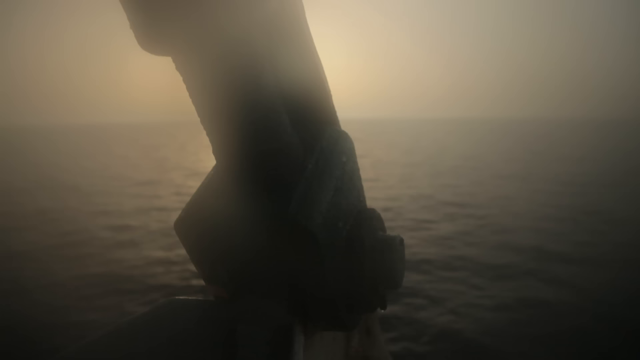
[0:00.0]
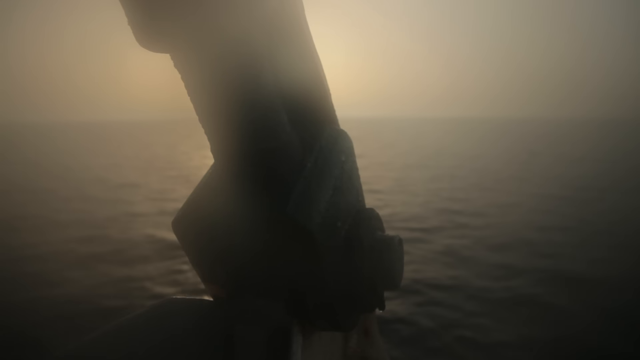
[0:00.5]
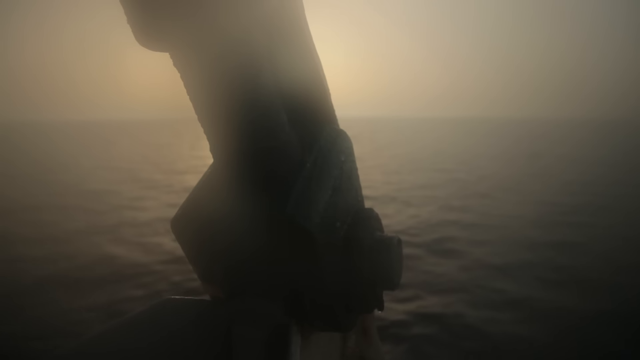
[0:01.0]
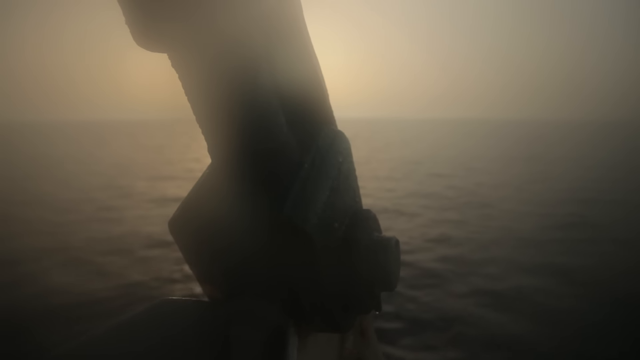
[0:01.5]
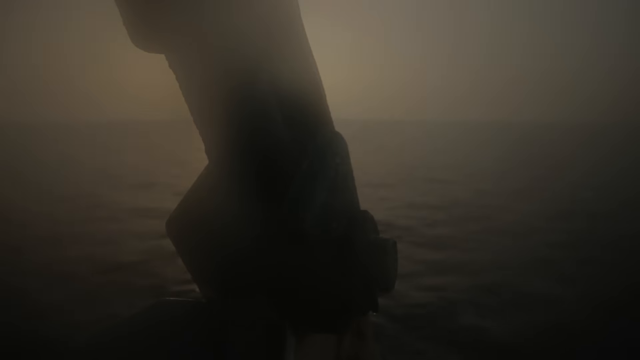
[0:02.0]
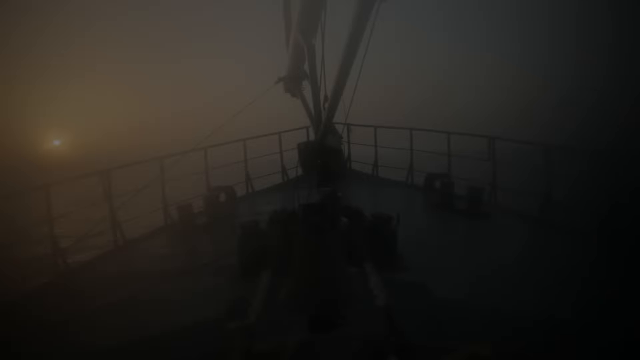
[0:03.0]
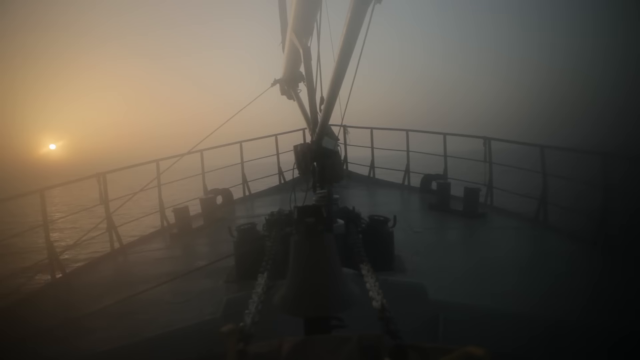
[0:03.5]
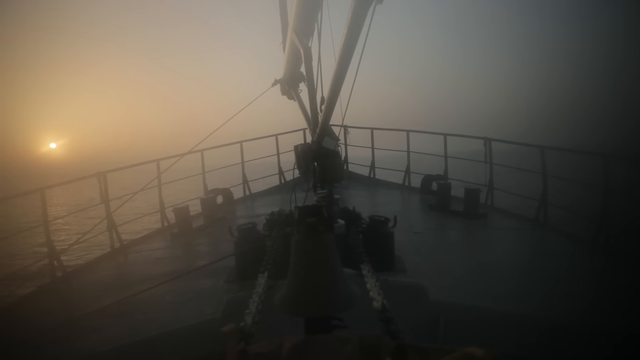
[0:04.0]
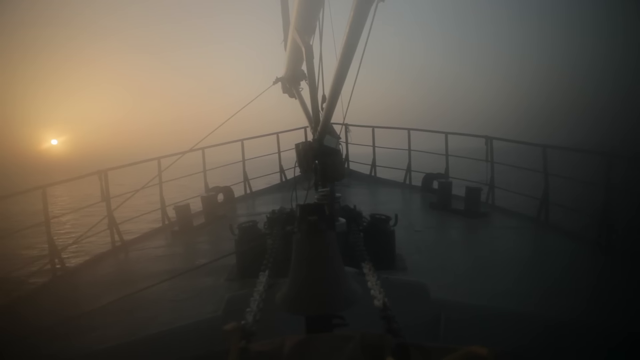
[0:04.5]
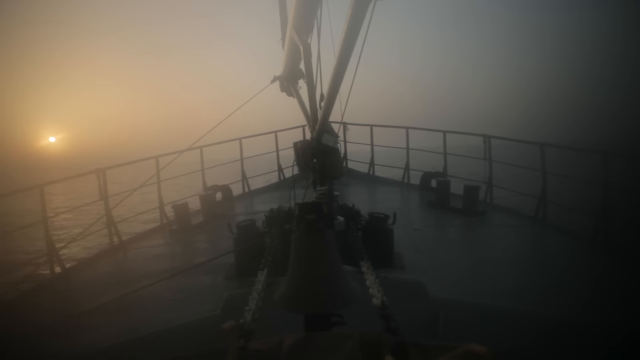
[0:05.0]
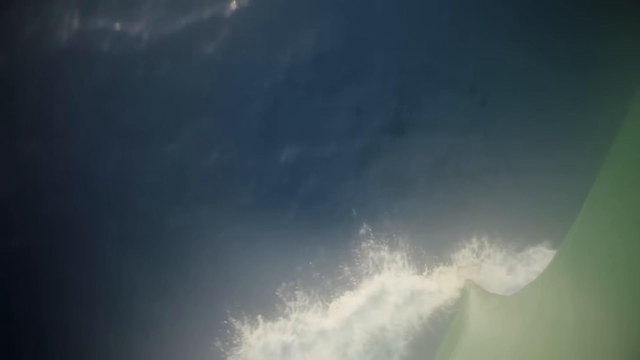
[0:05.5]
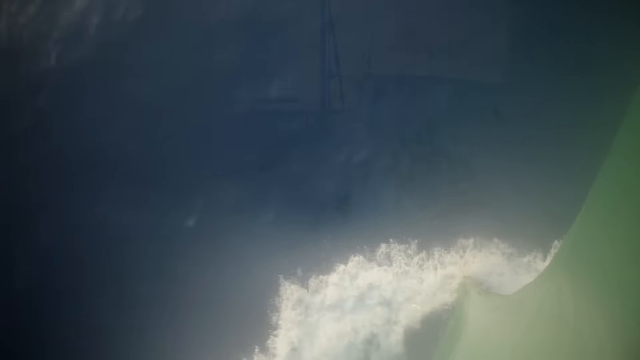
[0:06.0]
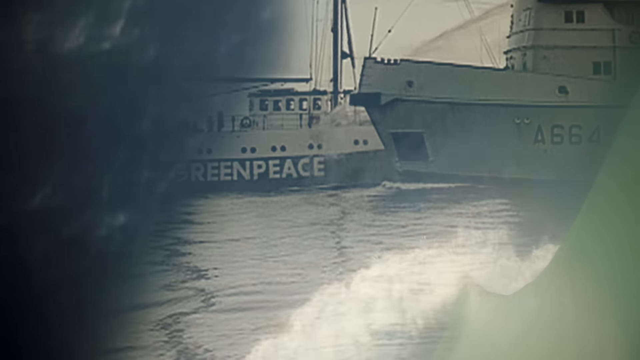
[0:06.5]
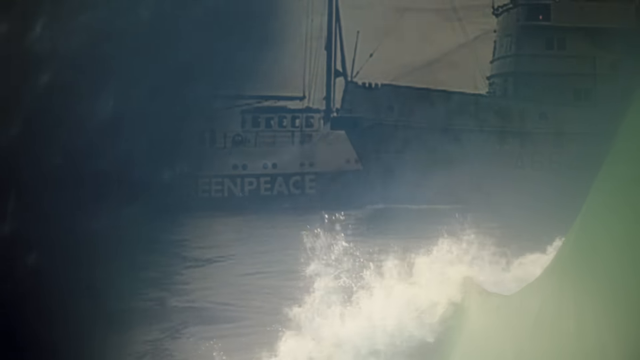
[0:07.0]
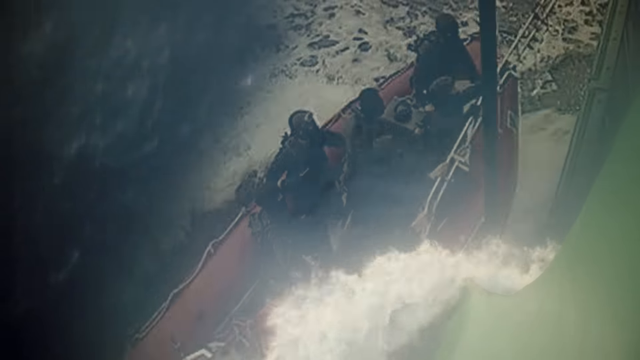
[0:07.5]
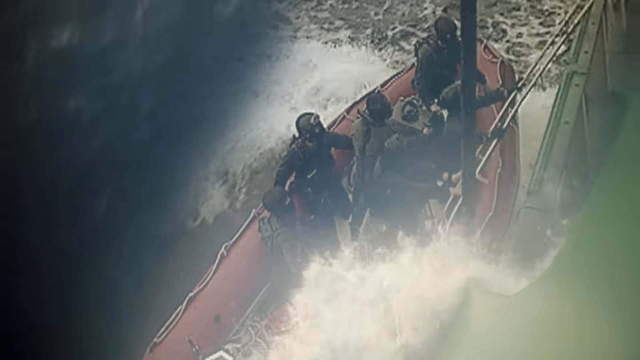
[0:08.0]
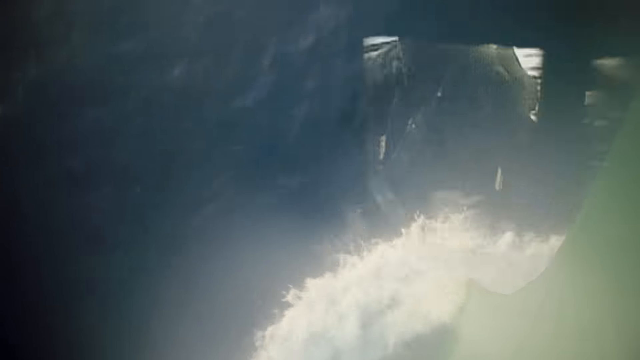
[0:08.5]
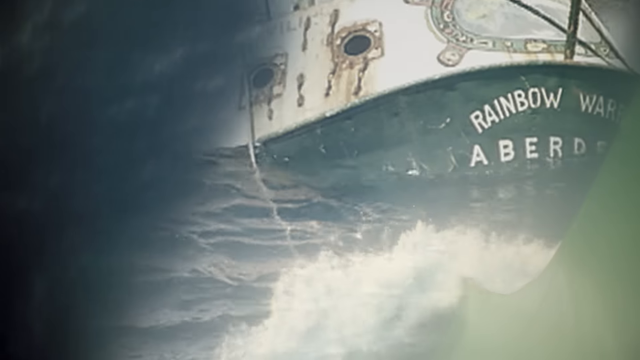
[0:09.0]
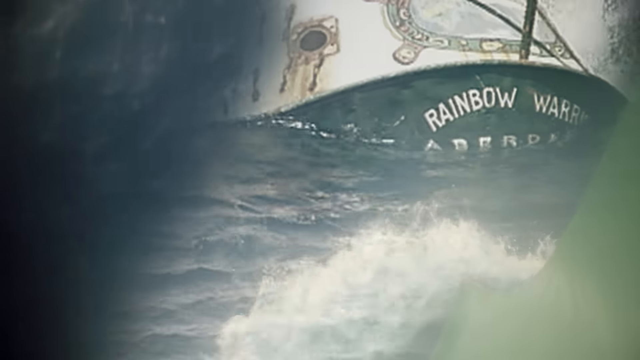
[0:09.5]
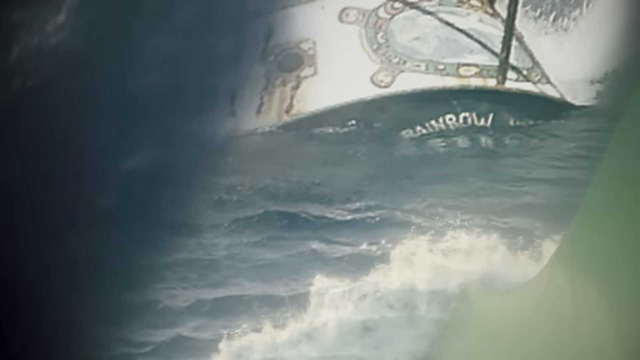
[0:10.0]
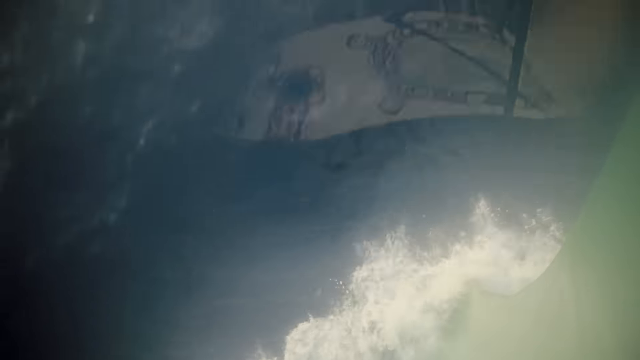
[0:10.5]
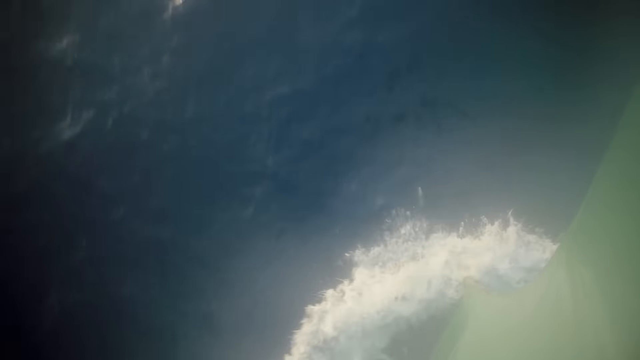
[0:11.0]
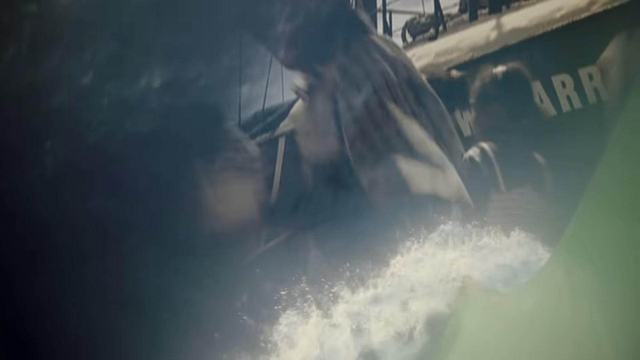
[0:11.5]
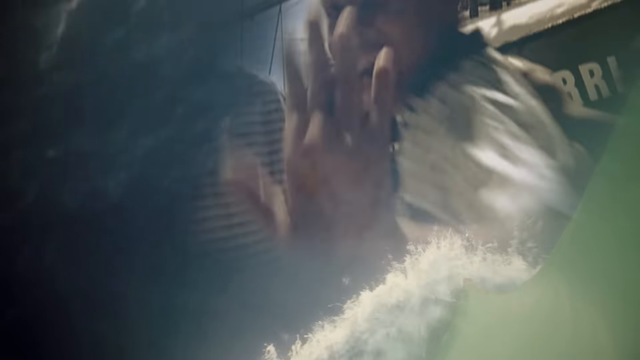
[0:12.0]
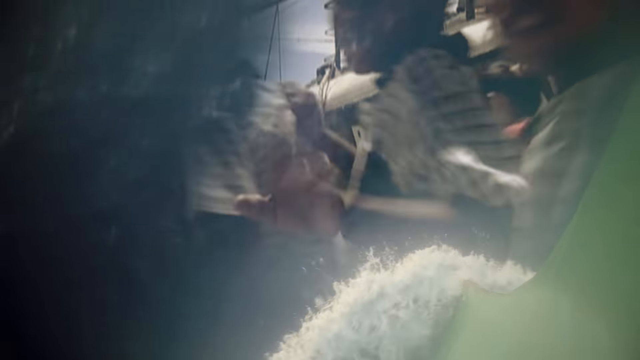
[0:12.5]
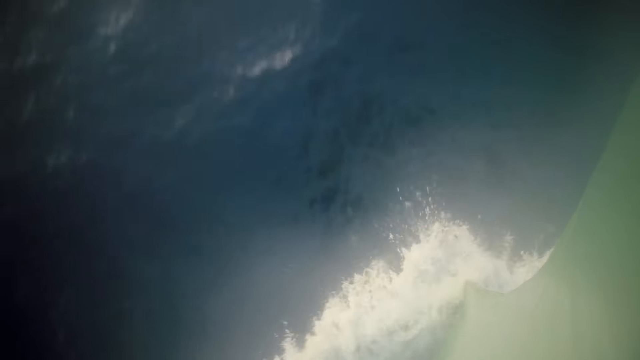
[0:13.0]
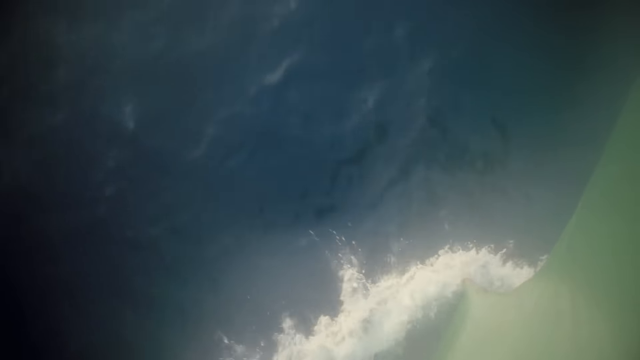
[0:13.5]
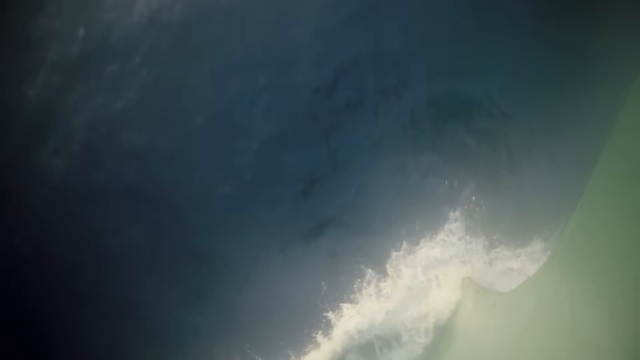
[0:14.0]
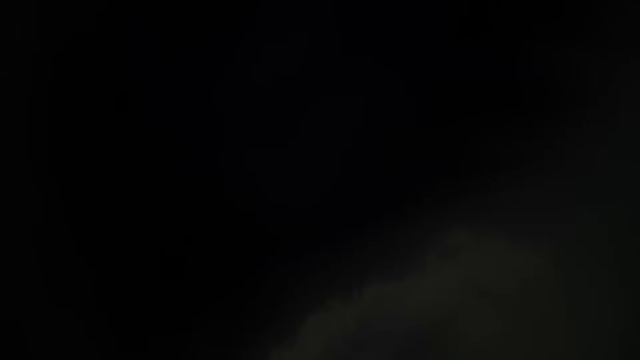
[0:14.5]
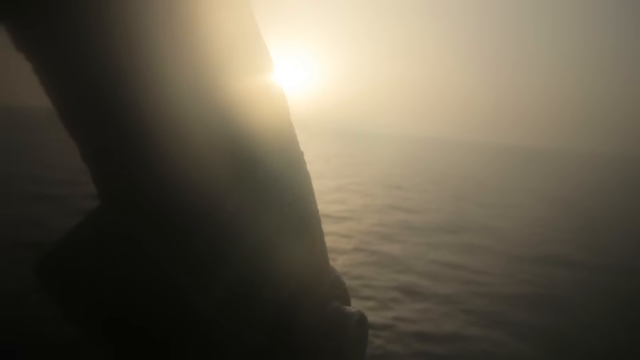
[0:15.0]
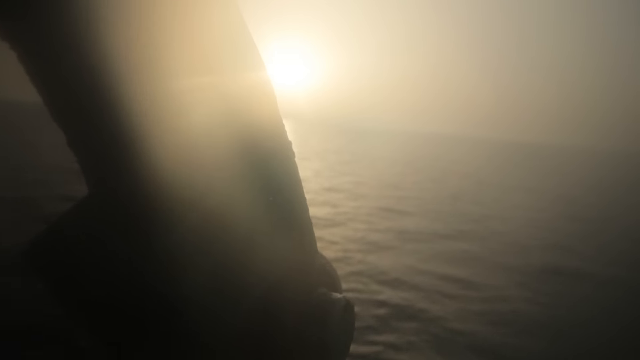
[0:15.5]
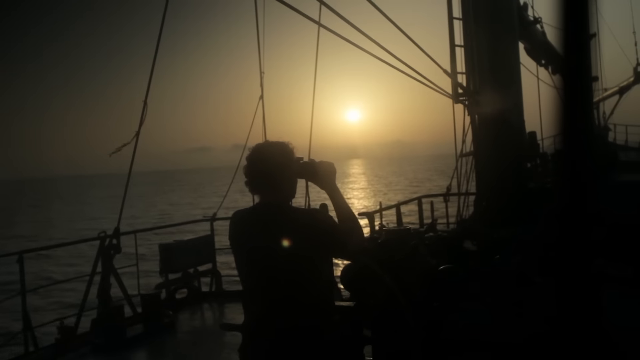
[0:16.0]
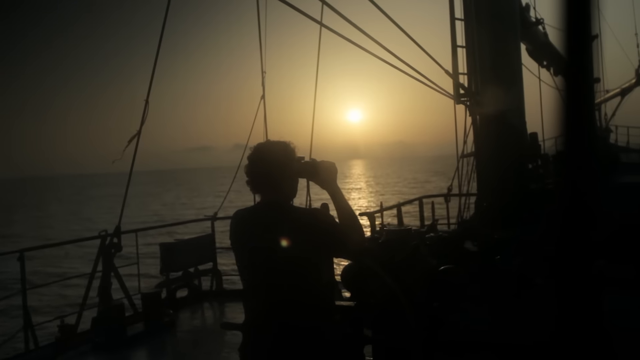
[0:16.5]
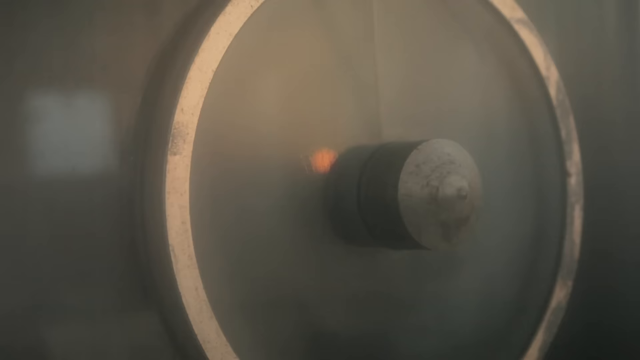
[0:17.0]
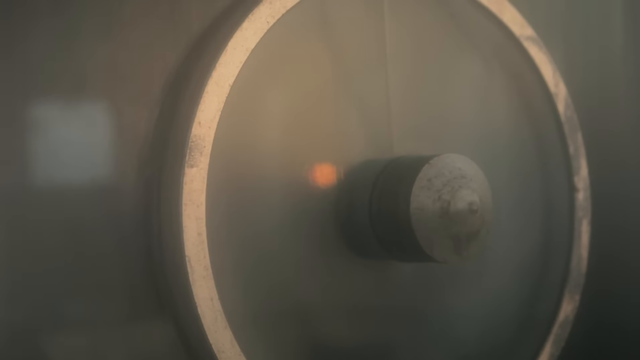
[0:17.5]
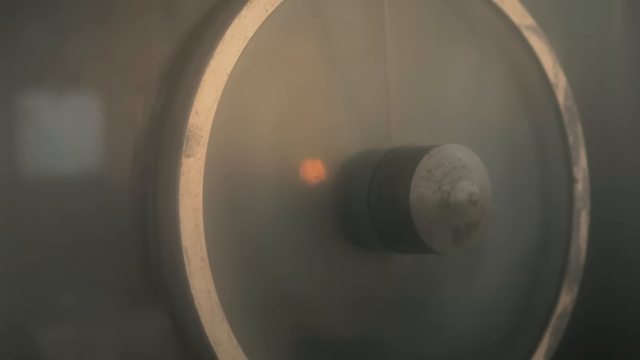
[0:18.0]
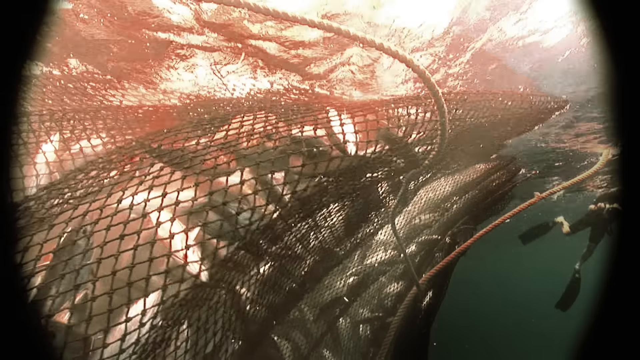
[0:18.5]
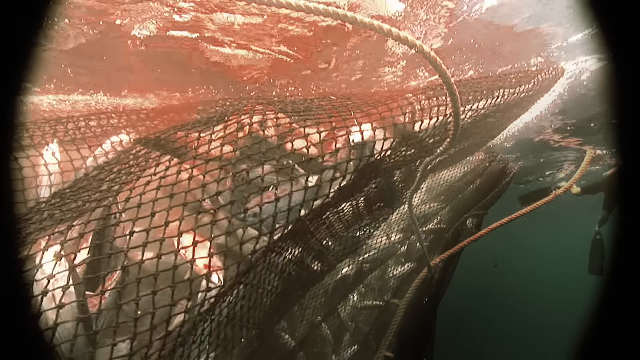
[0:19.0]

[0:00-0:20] The video opens with a boat on the open water, followed by pictures of people, fishermen, and fish in a net. People run around, and there is a lifeboat, tourists, and fishermen. Much of it is shots of a boat, plus one shot of a man chopping the head off a fish. The open ocean appears along with pieces of a big, fully equipped fishing boat. Someone on the boat looks out with binoculars, staring across the open ocean. The footage is mostly black and white, with some color.